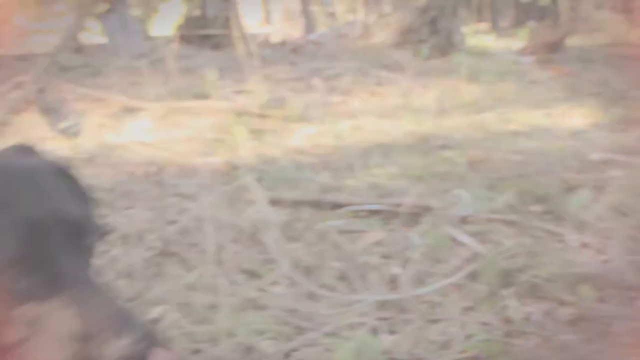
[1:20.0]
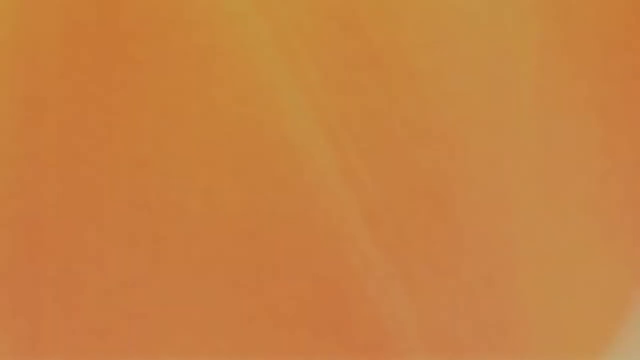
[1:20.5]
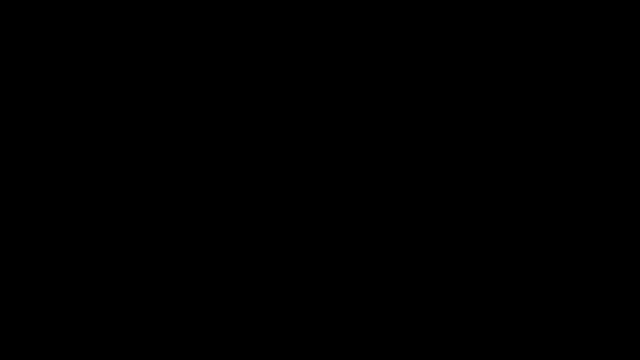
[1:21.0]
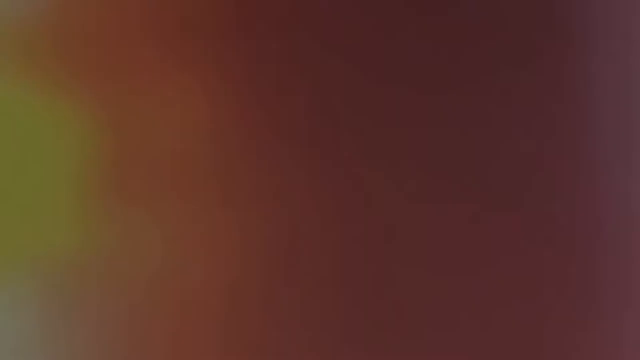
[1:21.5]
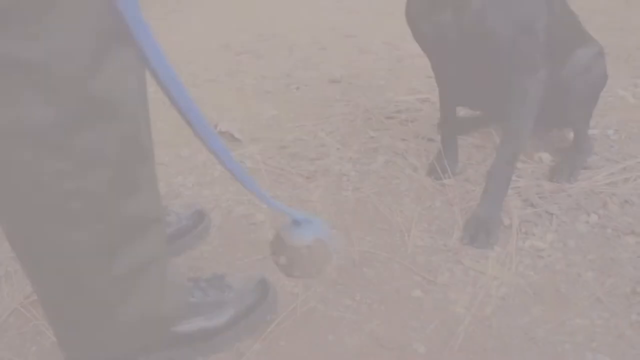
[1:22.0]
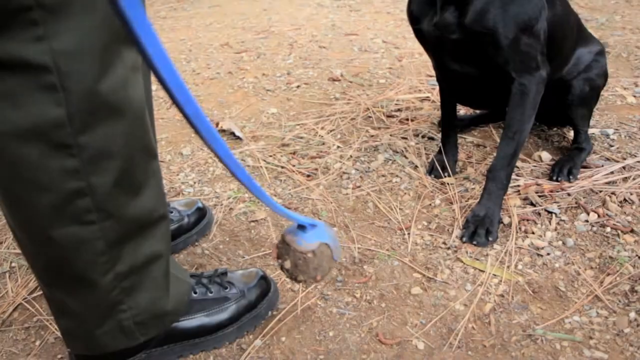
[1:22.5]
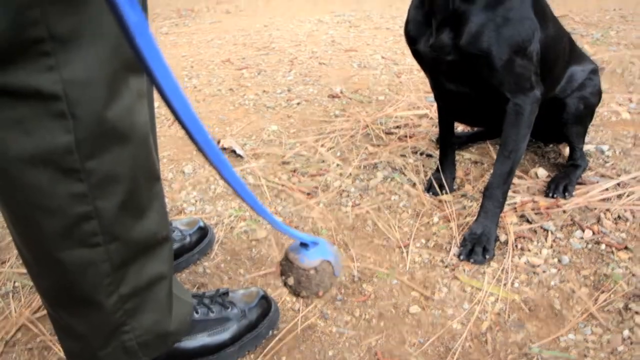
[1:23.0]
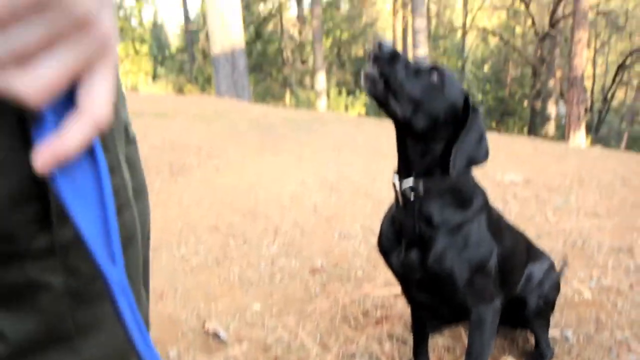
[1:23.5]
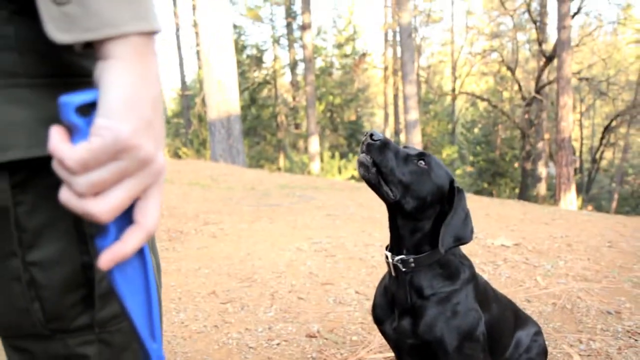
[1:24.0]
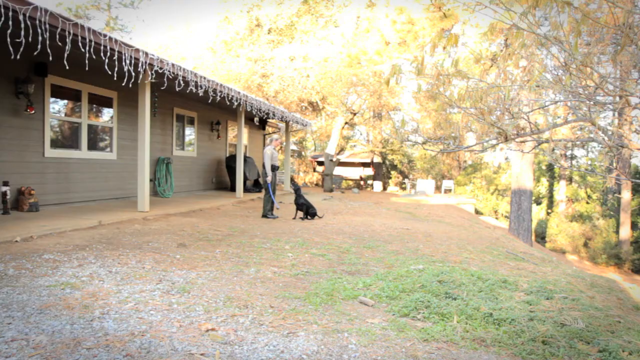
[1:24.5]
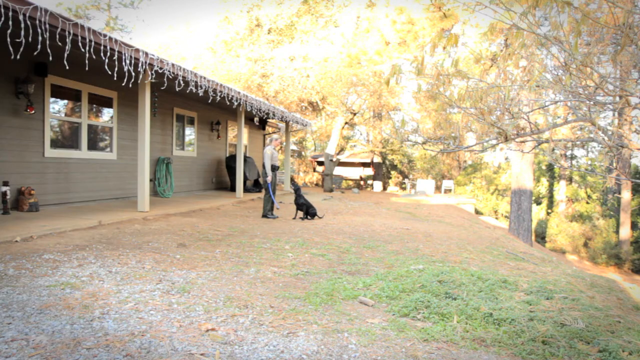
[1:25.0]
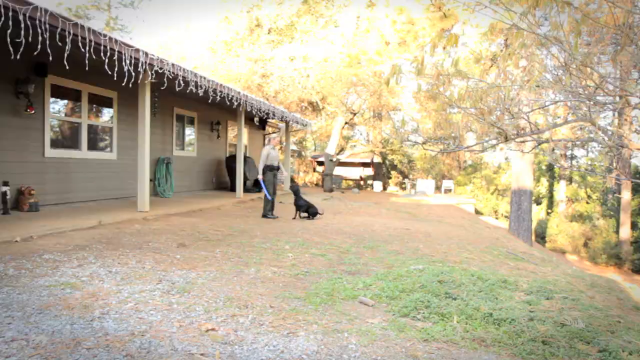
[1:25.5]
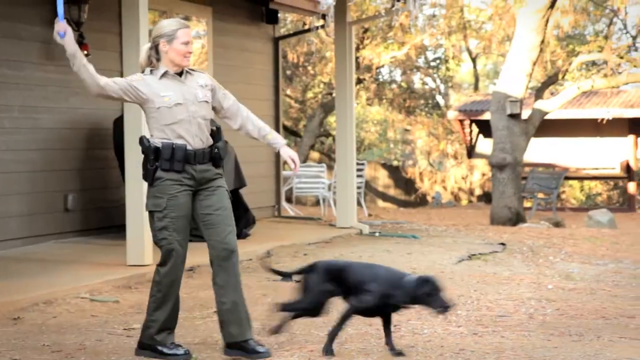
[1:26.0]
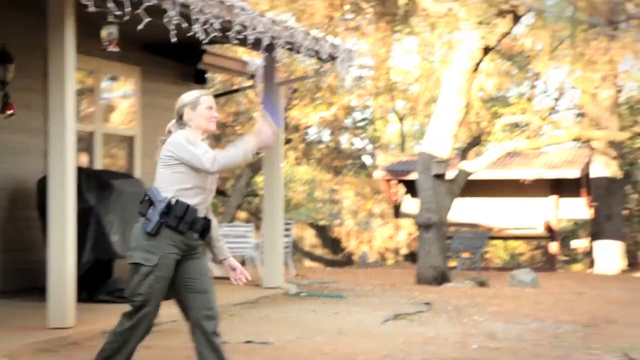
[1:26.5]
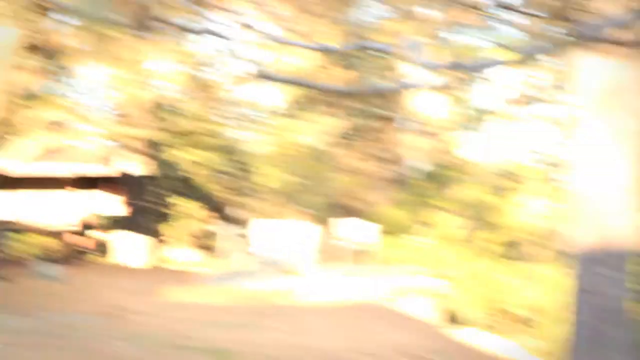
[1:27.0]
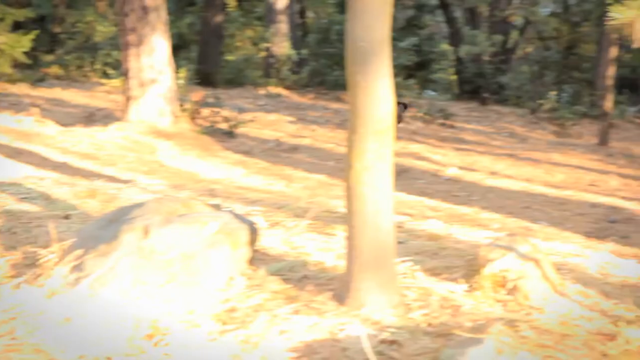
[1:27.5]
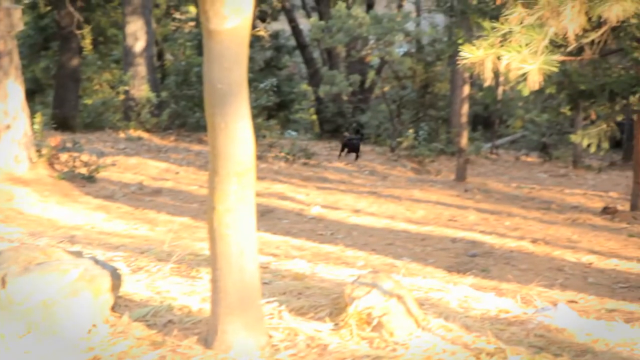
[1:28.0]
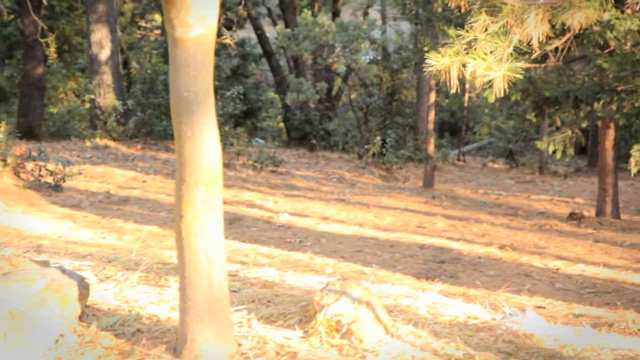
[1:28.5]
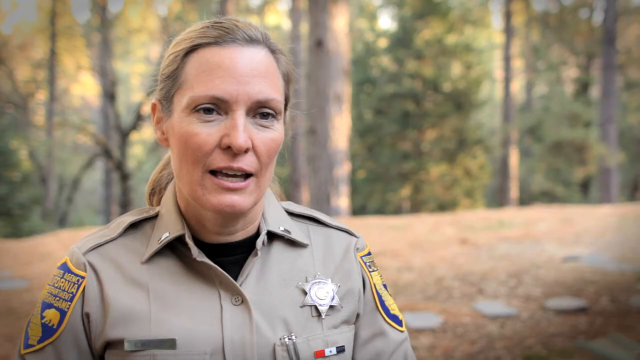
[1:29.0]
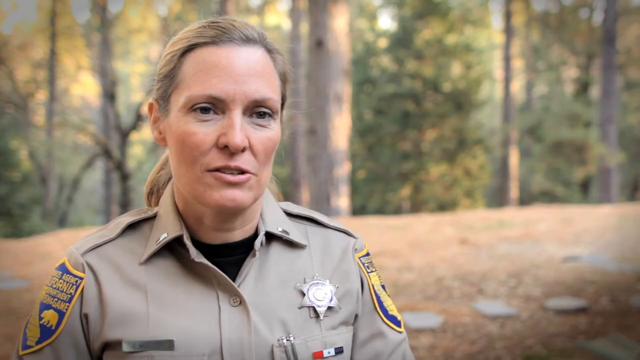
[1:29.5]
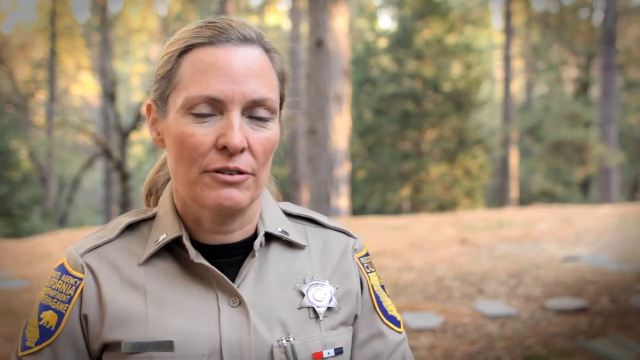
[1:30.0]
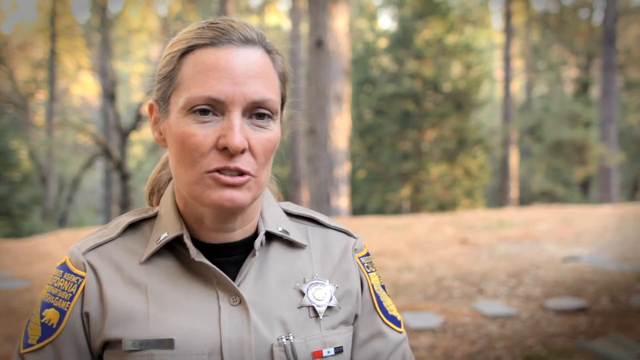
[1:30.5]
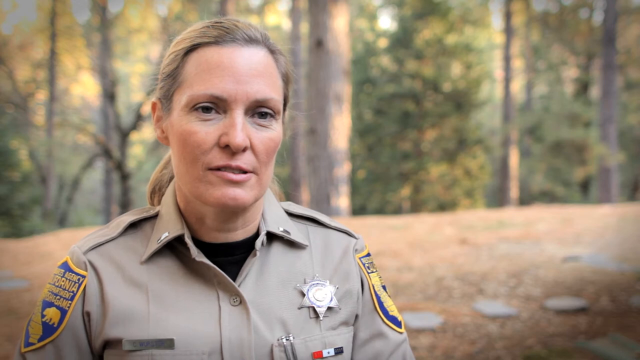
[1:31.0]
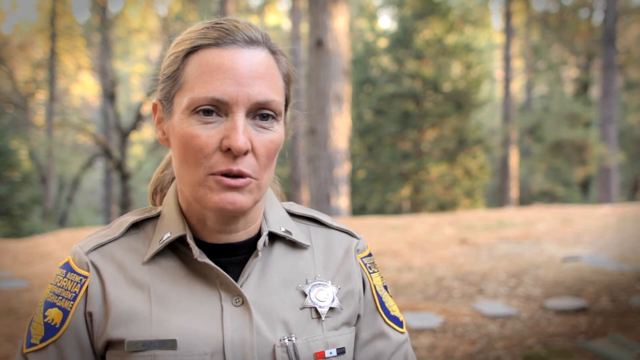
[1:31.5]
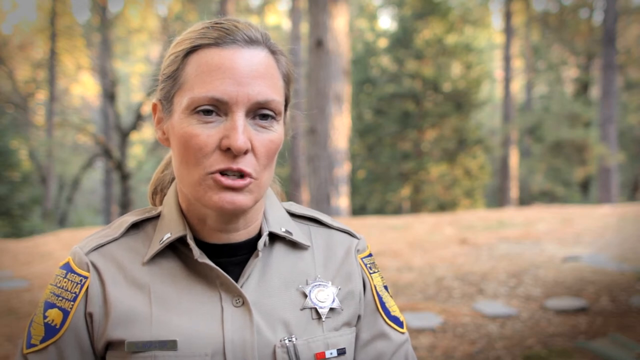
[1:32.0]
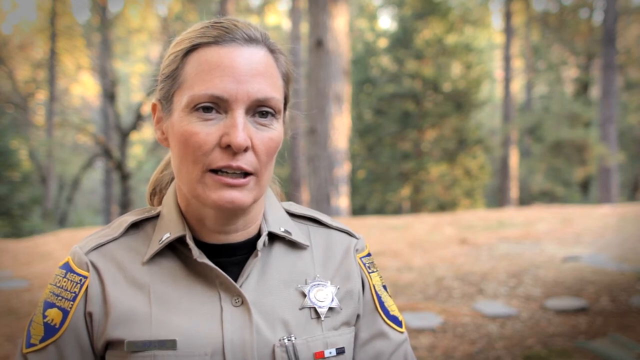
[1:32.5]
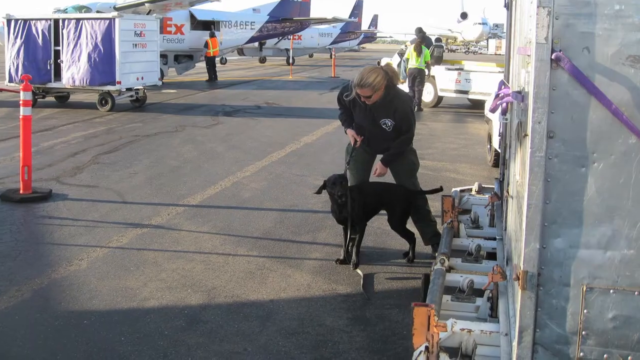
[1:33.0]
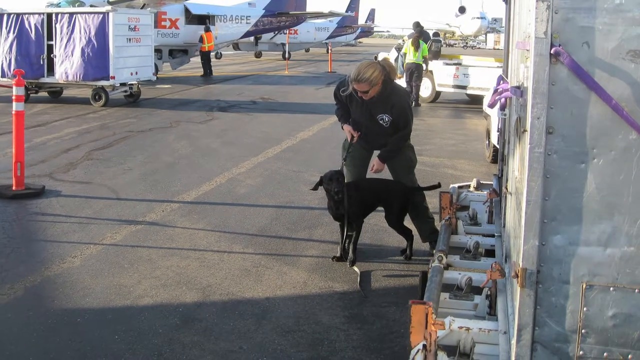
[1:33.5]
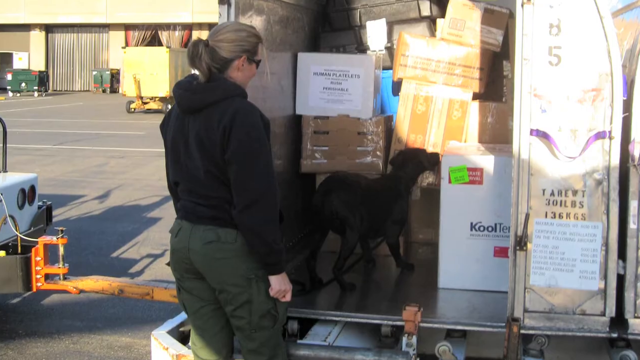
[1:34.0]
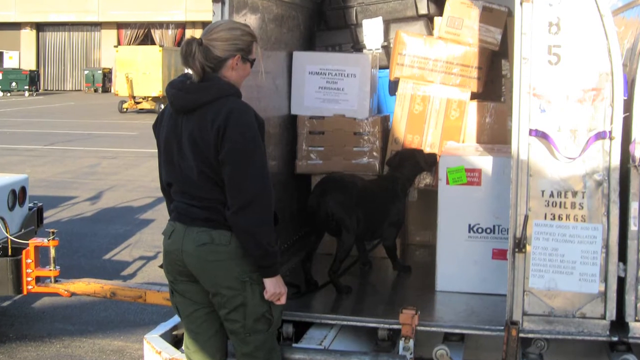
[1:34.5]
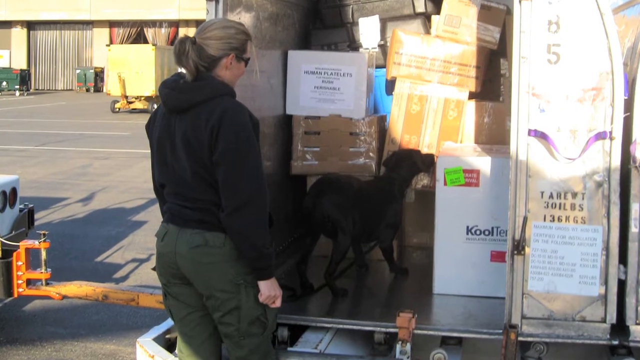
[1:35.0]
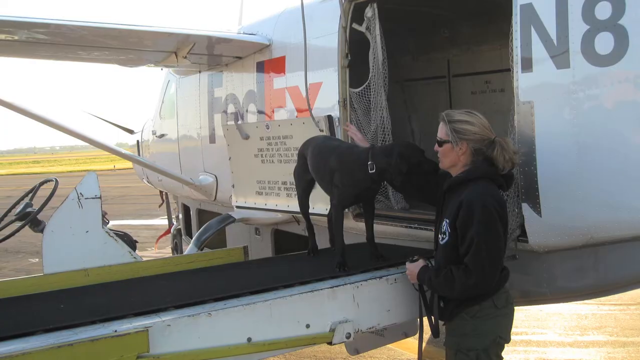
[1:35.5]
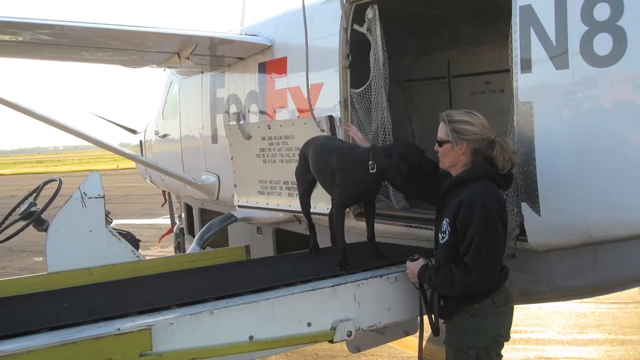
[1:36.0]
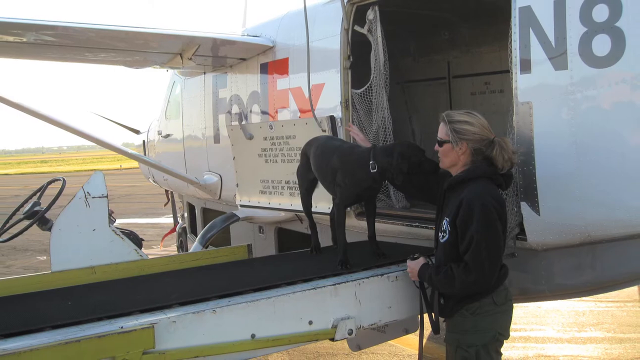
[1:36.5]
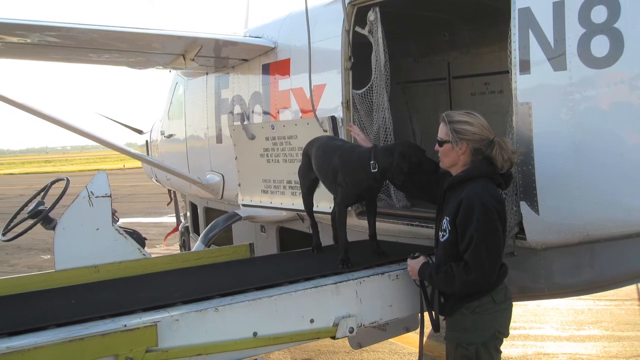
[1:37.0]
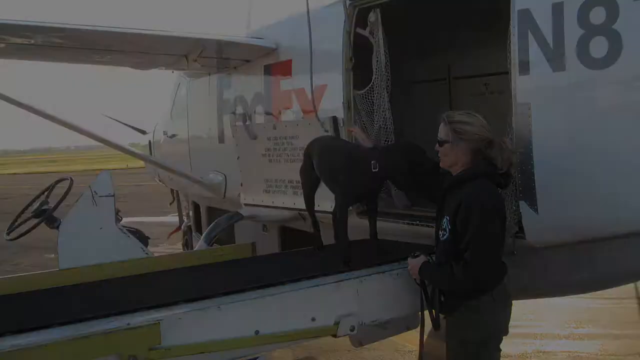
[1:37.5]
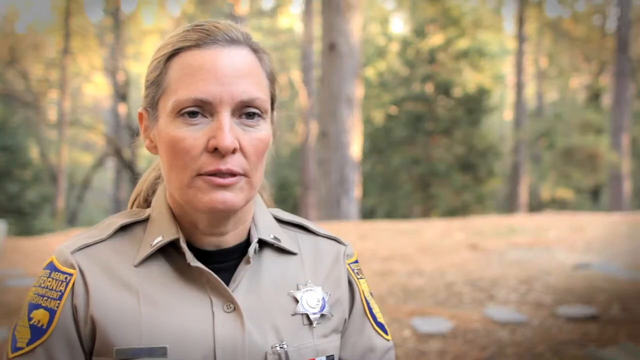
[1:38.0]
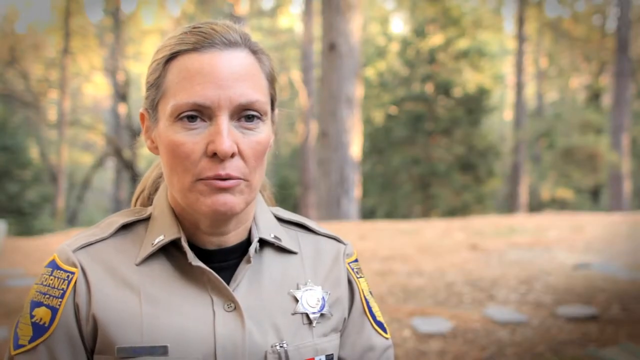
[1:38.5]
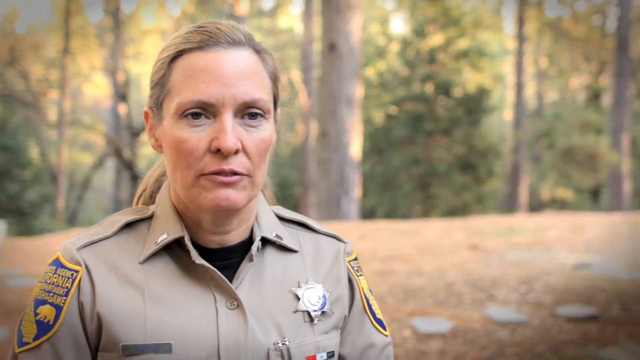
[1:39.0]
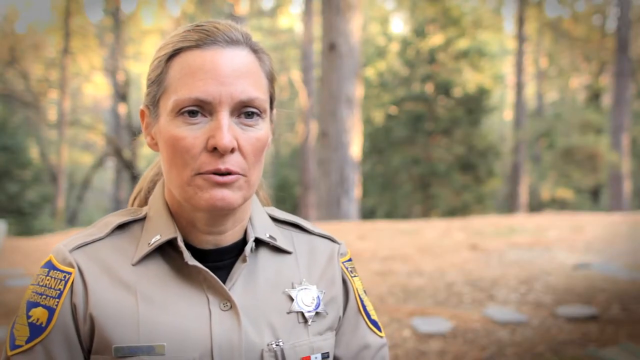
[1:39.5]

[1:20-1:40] Christy has playtime with the dog. The black lab sits on the forest floor while Christy holds a large plastic dog toy that holds a ball at its end. The dog looks up intently at Christy, waiting for her to throw the ball. Christy stands in front of a small building or house with Christmas lights hung from the top of the roof. A wound-up green hose is on the side of the home, along with what looks like a grill covered in a black tarp. Christy extends the toy behind her and throws the ball very far into the forest in front of her, and the dog quickly follows, chasing after the ball. Christy then talks to the camera in front of the wooded area. In another shot, the dog sniffs out packages on an airport tarmac, including a small plane with the FedEx logo on the outside.